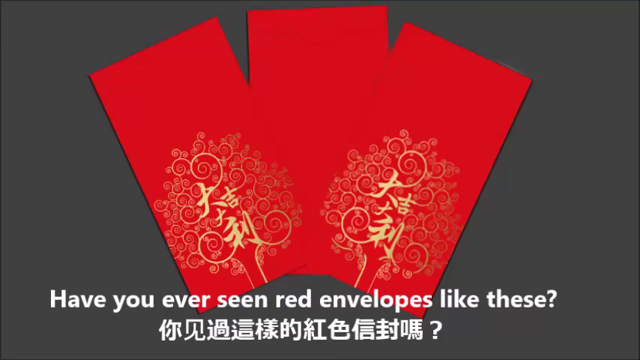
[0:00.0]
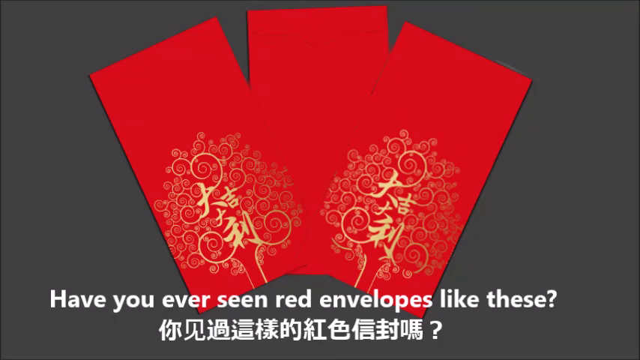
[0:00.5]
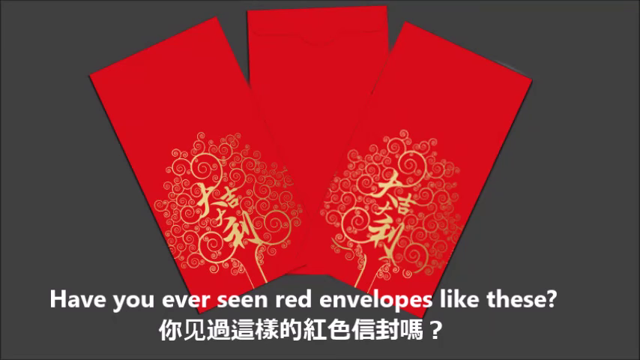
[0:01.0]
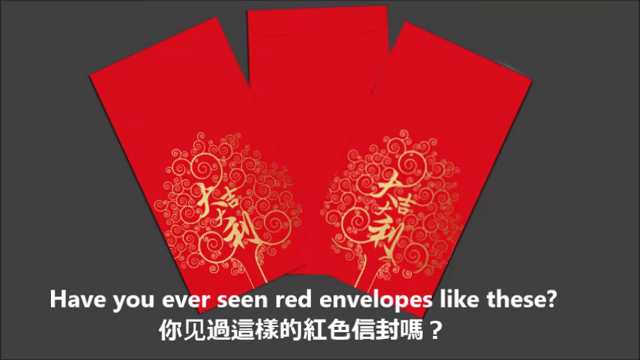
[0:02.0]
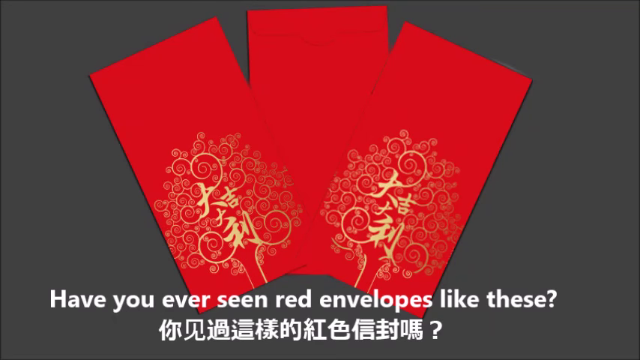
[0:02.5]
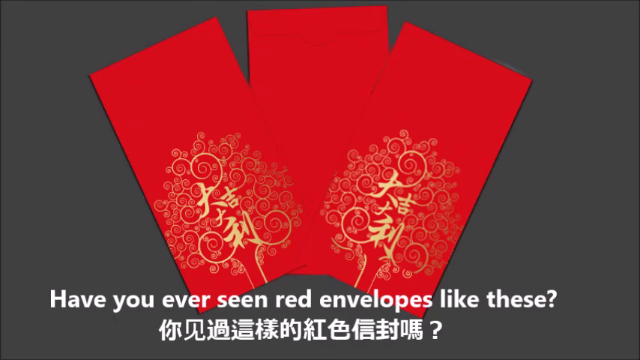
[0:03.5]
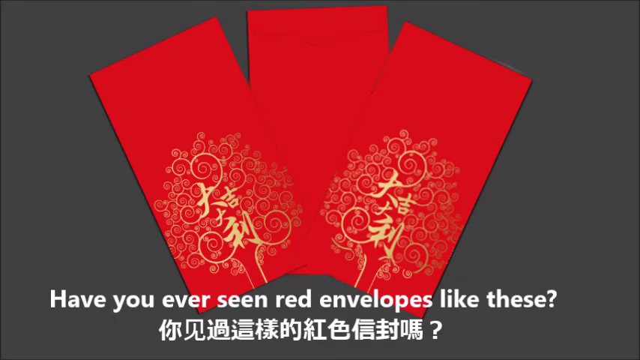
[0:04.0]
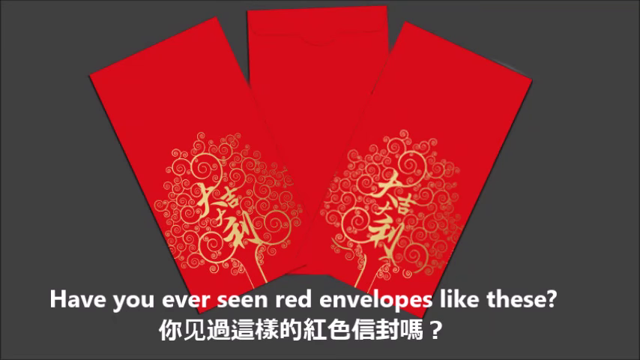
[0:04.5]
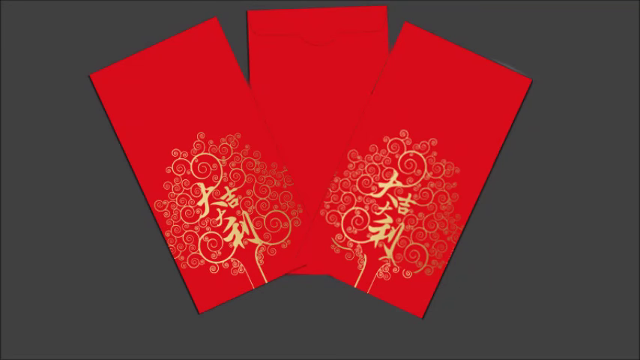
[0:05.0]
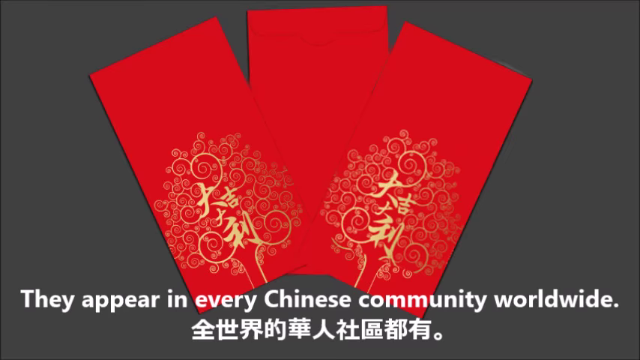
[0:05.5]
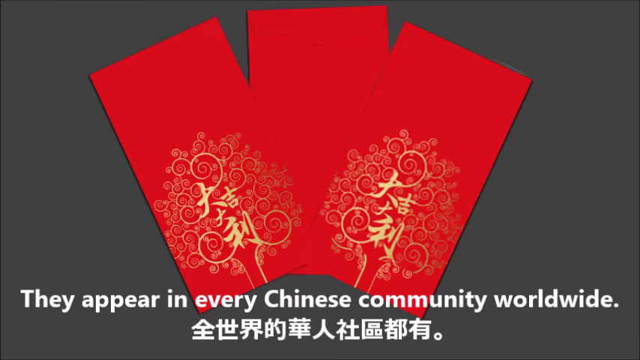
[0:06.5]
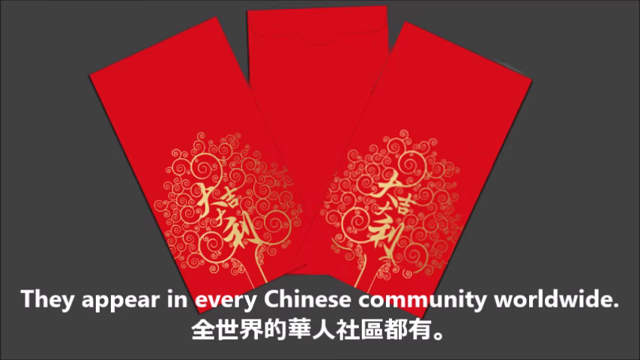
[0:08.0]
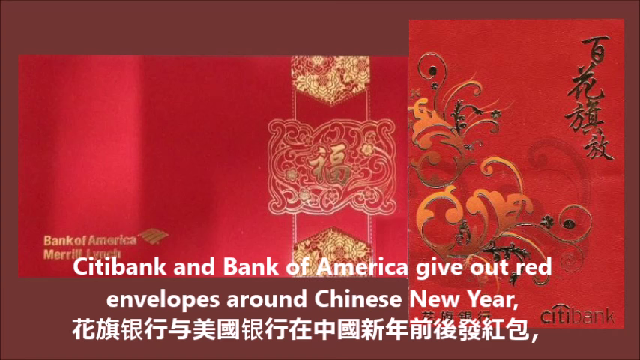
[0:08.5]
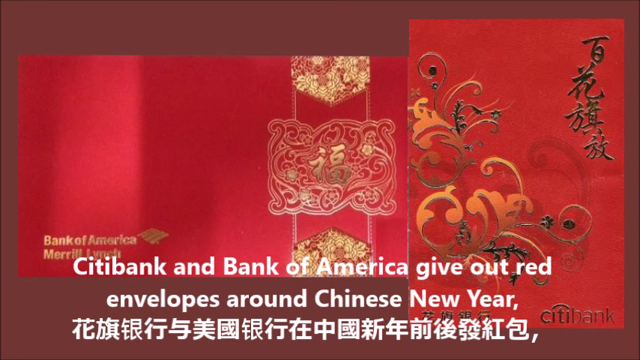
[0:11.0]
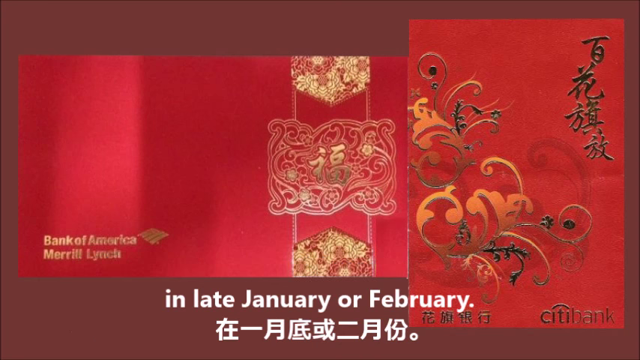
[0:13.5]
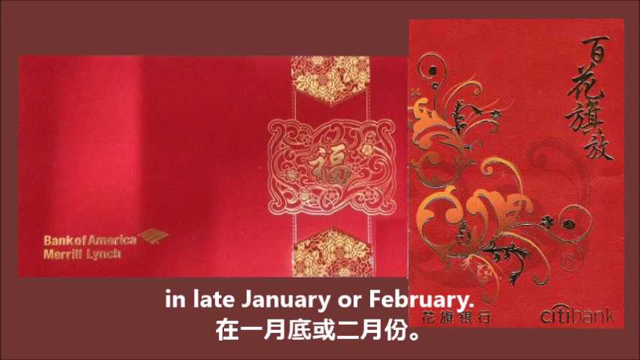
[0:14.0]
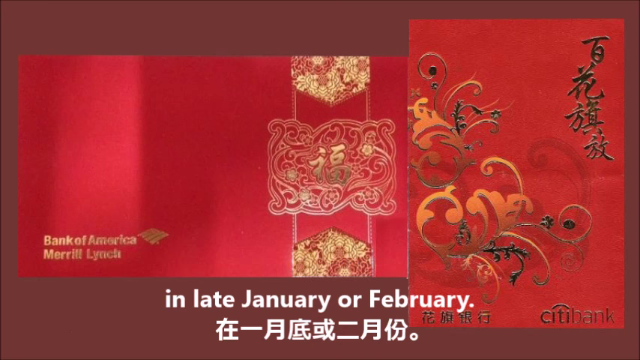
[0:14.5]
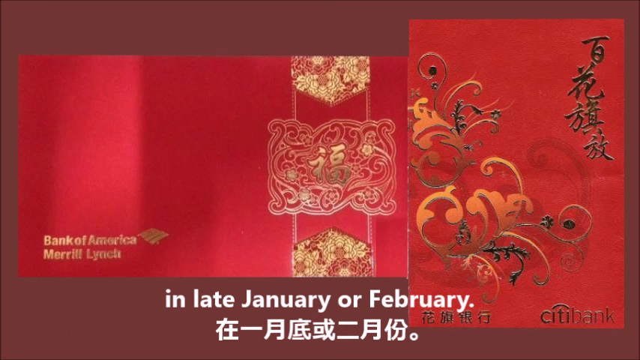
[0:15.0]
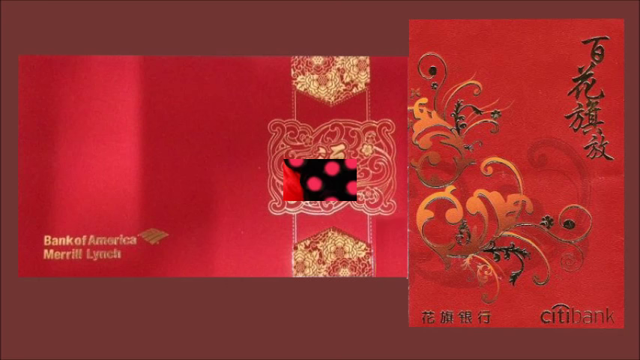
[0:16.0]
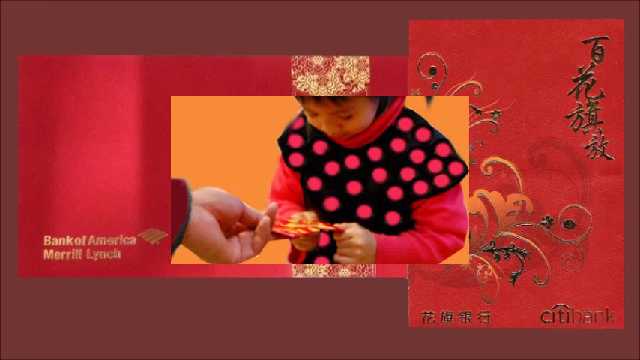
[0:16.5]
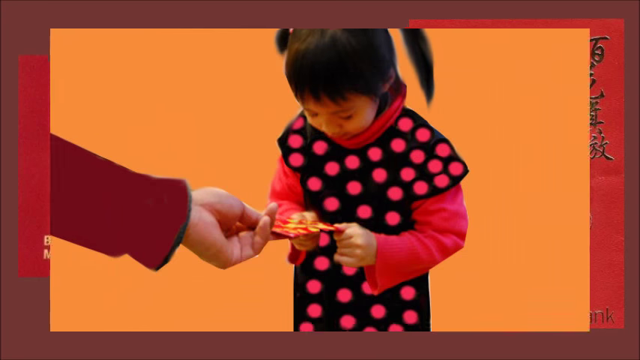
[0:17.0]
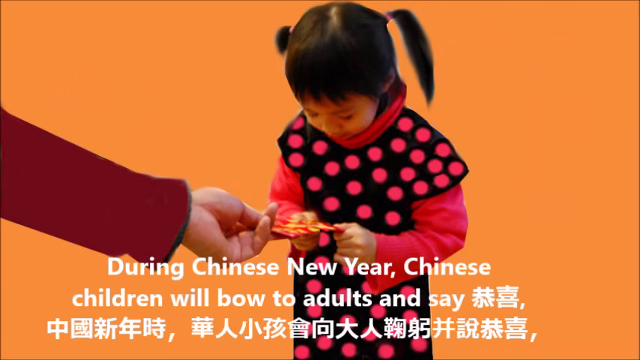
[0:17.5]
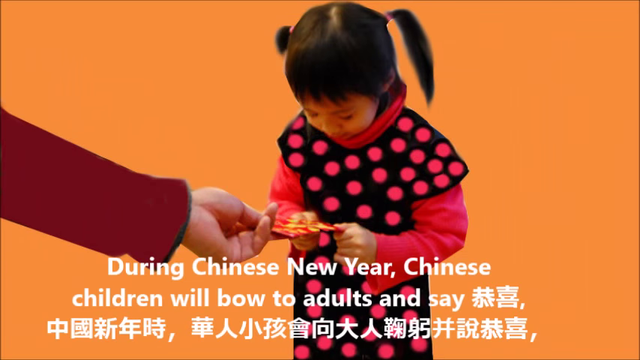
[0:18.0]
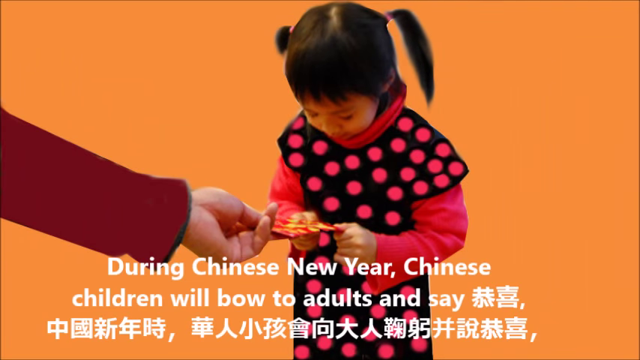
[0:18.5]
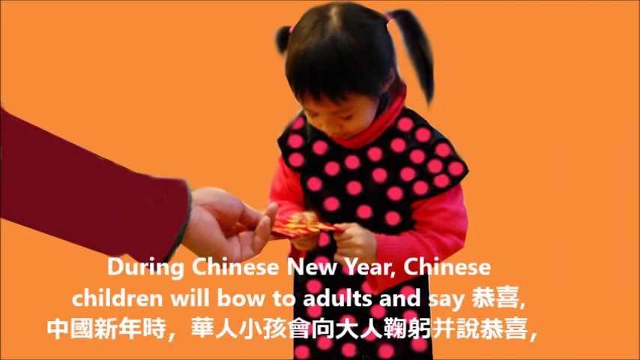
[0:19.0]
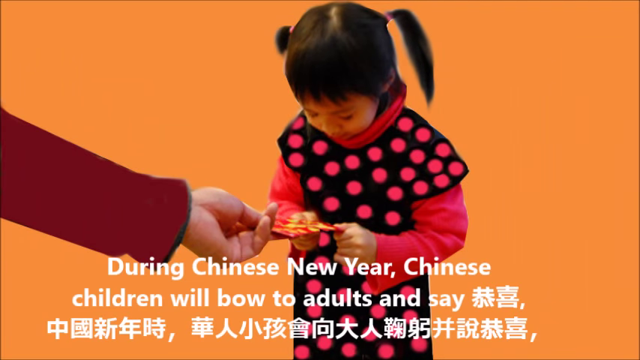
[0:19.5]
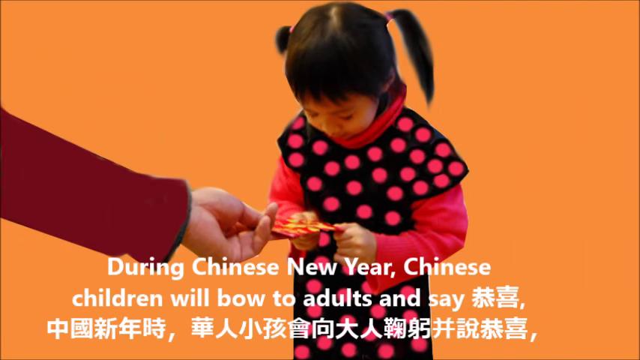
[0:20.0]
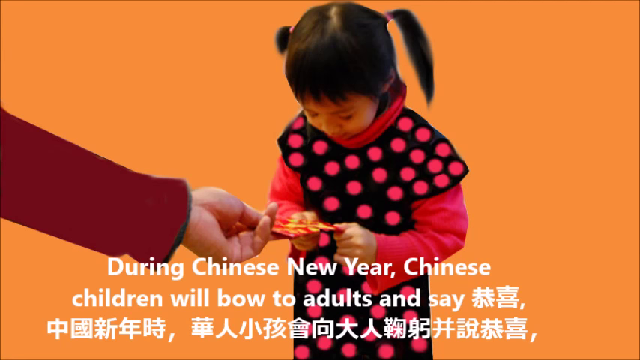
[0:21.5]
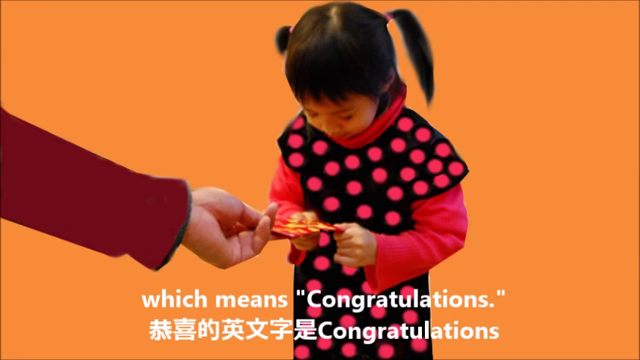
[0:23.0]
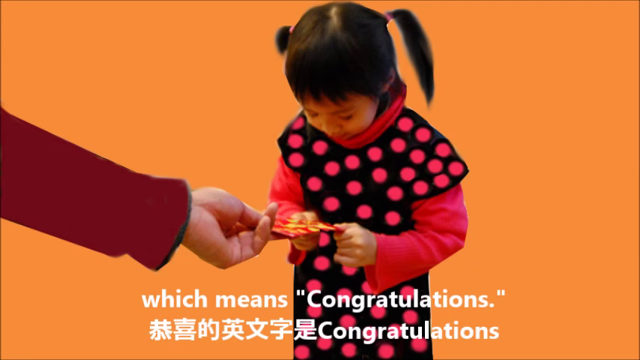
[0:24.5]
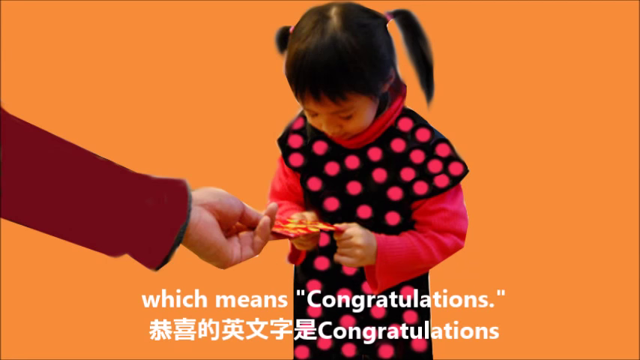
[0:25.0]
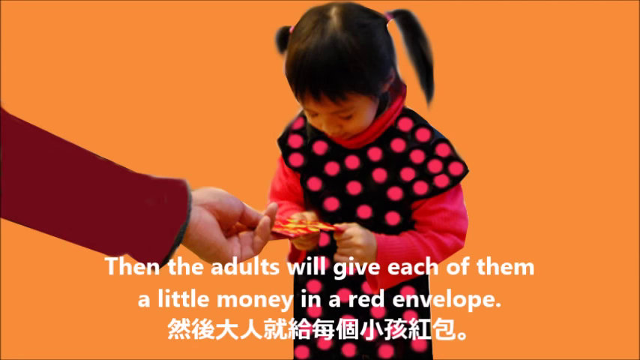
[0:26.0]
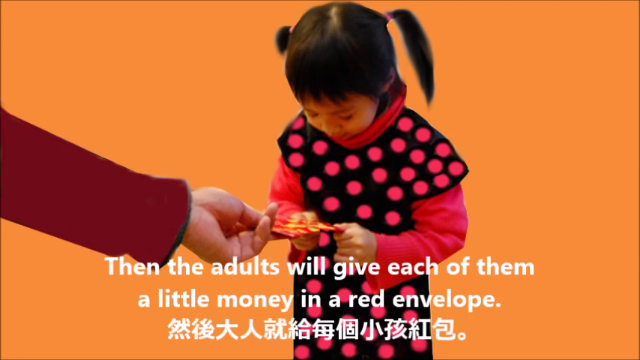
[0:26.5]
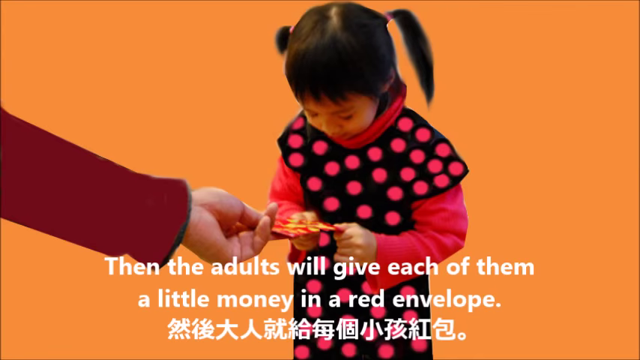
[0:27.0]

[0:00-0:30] Three red strips of paper with some unique writing in gold are shown against a dark grey background. White text at the bottom reads "have you ever seen red envelopes like these", with a bit more text in Chinese Mandarin writing below it. White text then reads "they appear in every Chinese community worldwide". The screen changes to a long rectangular red piece of paper with gold illustrations on its right-hand side and "Bank of America Merrill Lynch" in gold at the bottom left. On the right-hand side of the screen is another red piece of paper with more illustrations, with "Citibank" at its bottom right. White text reads "Citibank and Bank of America give out red envelopes around Chinese New Year in late January or February". The screen then changes to an image of a small girl in a black top with pink polka dots being handed one of the envelopes, with white text reading "during Chinese New Year Chinese children will bow to adults and say" followed by Mandarin writing.